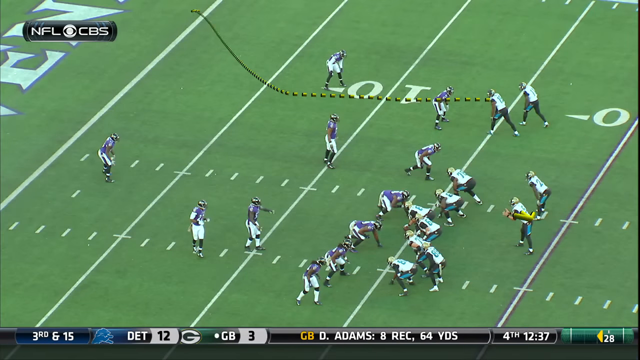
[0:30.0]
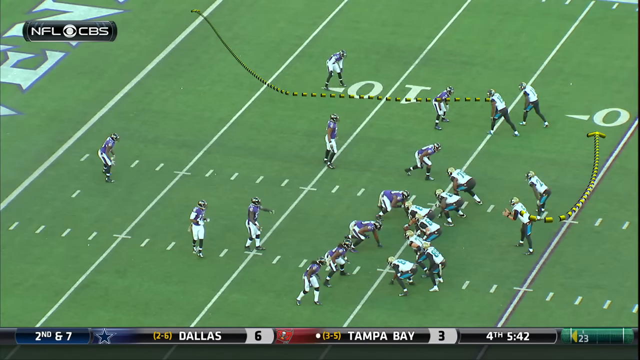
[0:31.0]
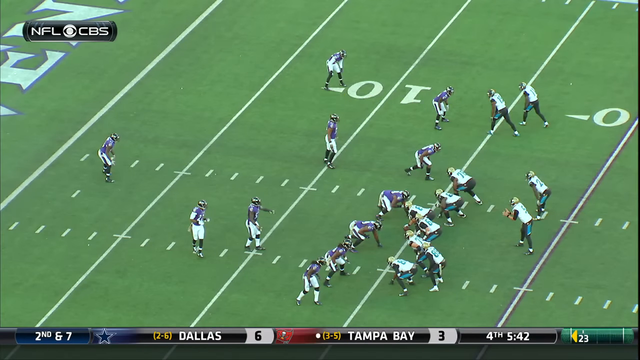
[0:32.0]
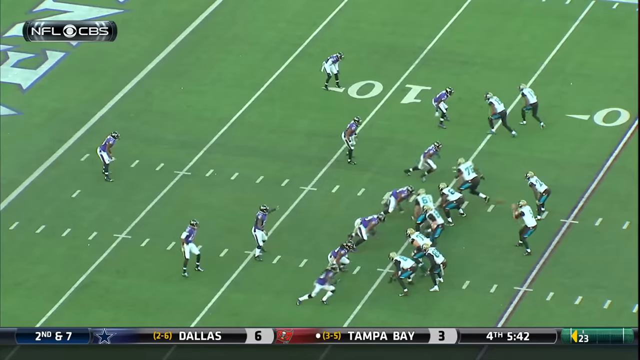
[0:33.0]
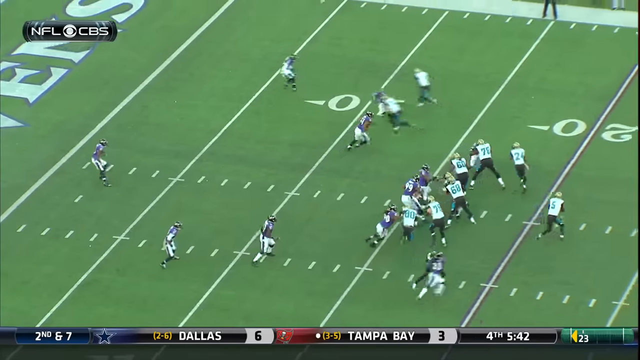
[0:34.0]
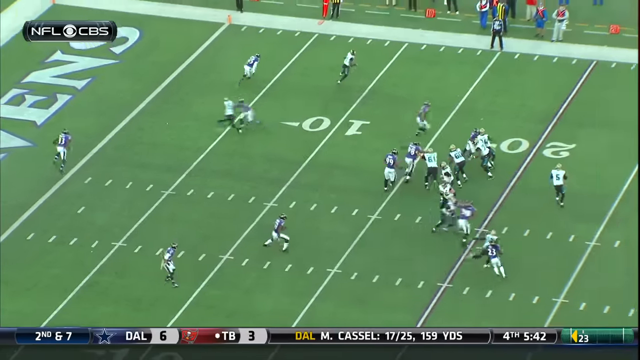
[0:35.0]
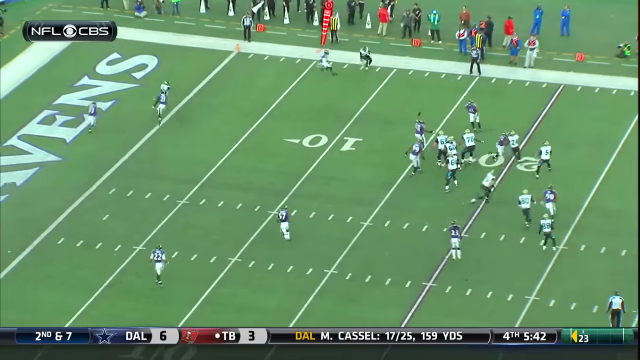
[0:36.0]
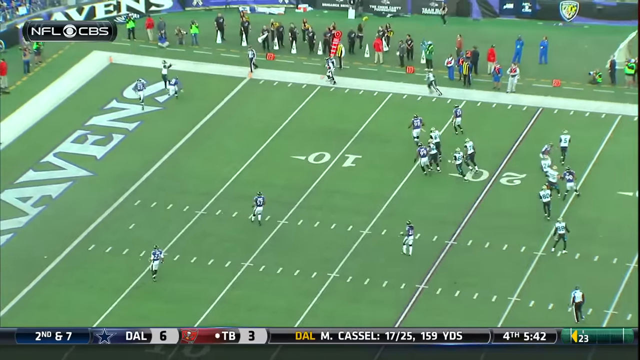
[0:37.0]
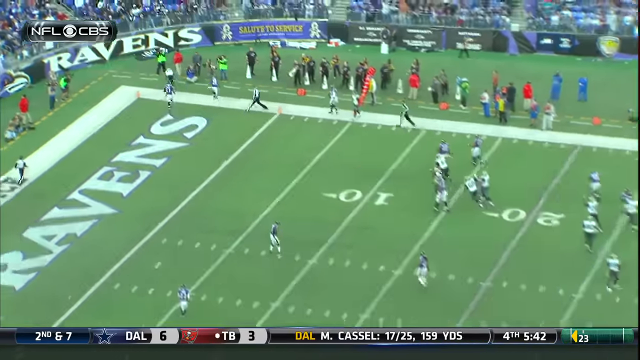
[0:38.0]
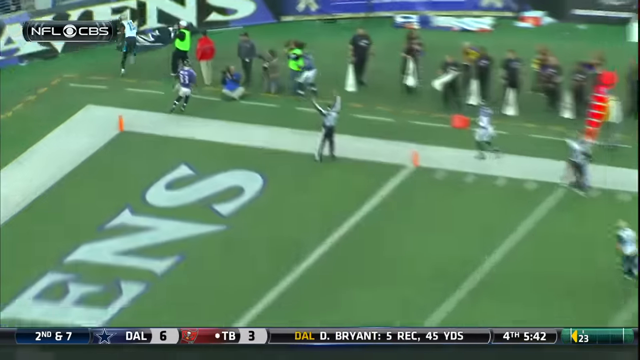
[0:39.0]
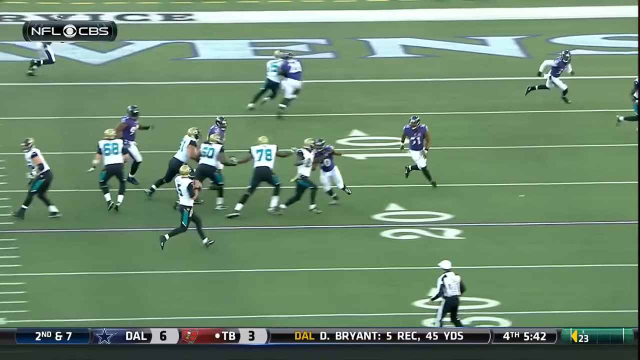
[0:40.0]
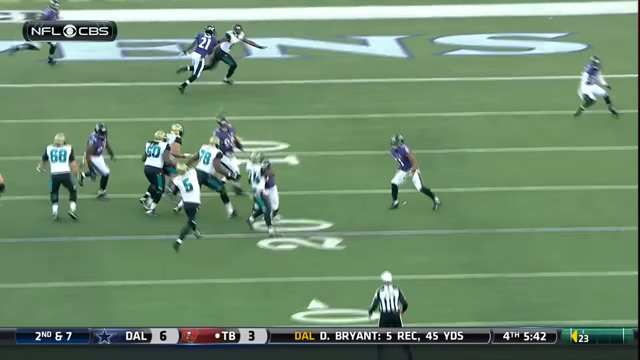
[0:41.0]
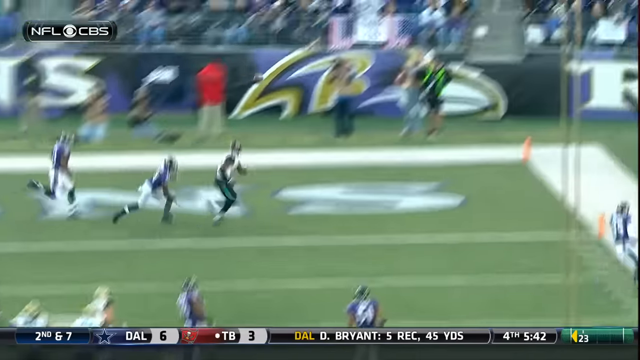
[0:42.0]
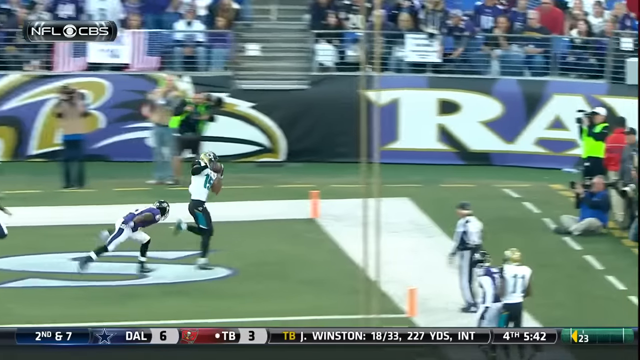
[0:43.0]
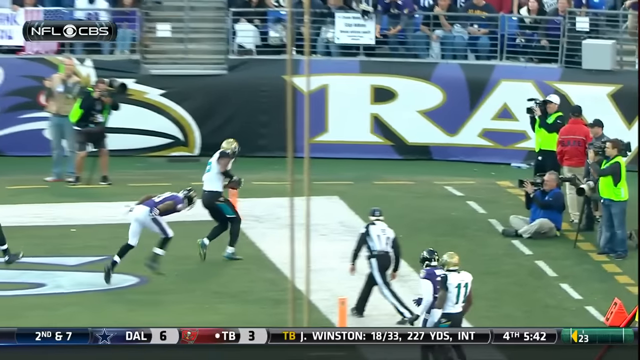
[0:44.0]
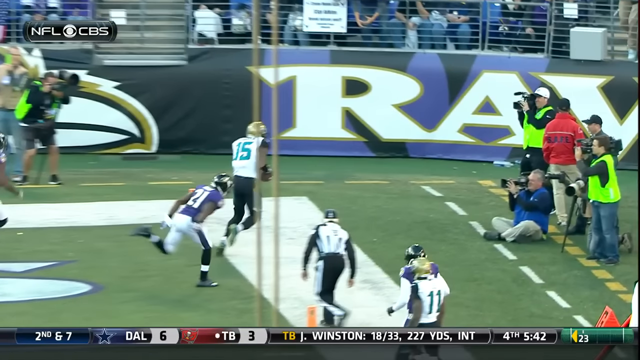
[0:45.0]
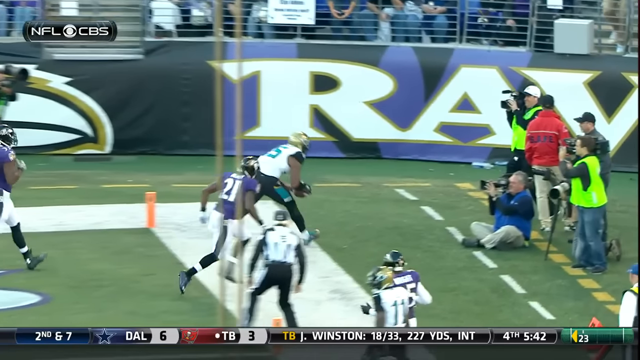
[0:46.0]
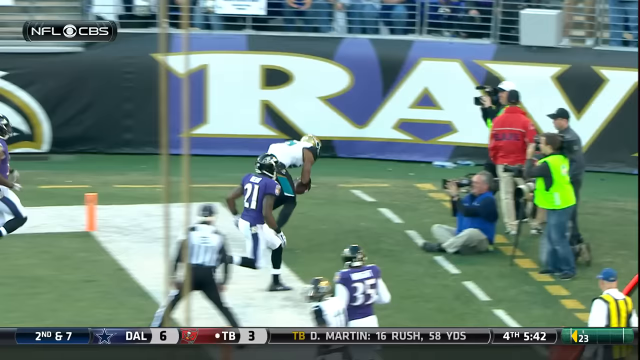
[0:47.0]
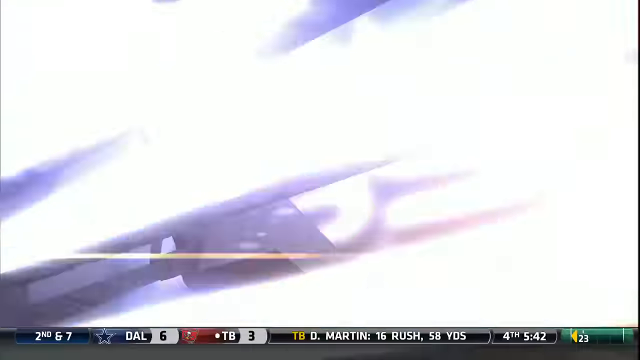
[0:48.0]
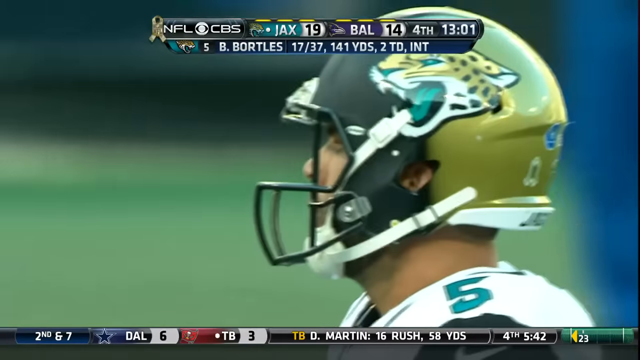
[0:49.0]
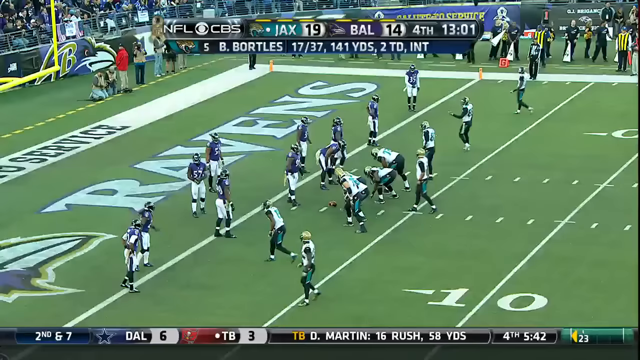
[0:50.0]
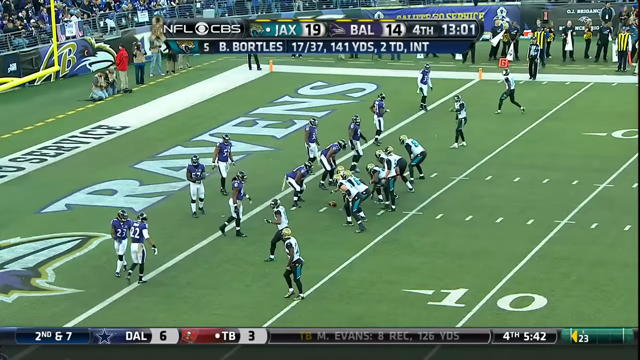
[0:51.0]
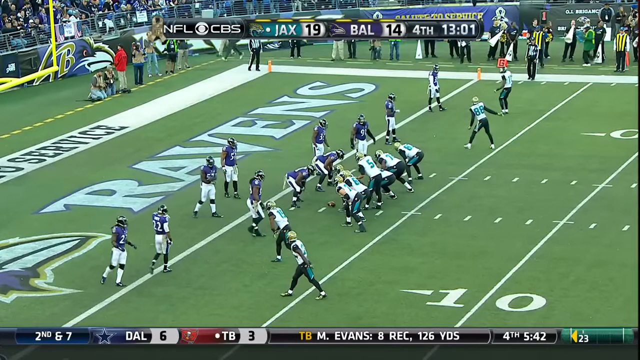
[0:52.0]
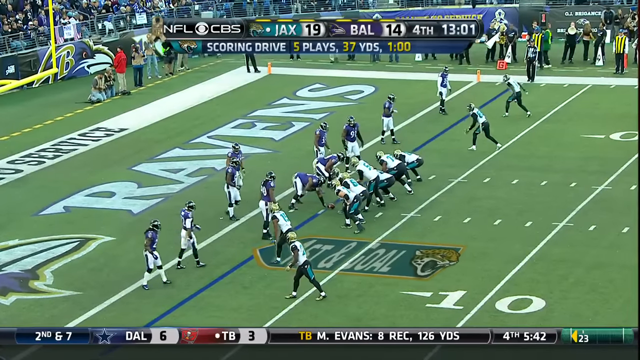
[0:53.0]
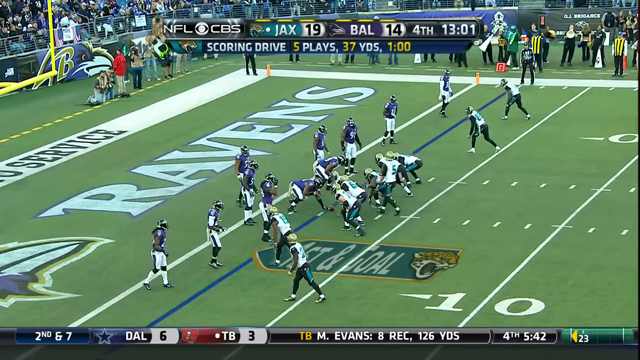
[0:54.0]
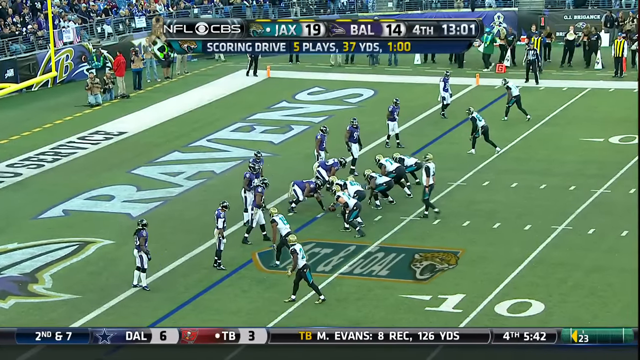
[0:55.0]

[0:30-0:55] Males, probably more than 20, are on the field playing American football. A close-up shot shows a man who looks to be in his late 20s. One team wears green shorts and white shirts, and the other team wears white shorts with blue trimmings on the side and blue shirts that also have white. All the players wear protective gear, including protective hats. The field has white markings, and CBS, NFL and Ravens logos are visible. One team is celebrating while the other team is not so happy about the result of the game.